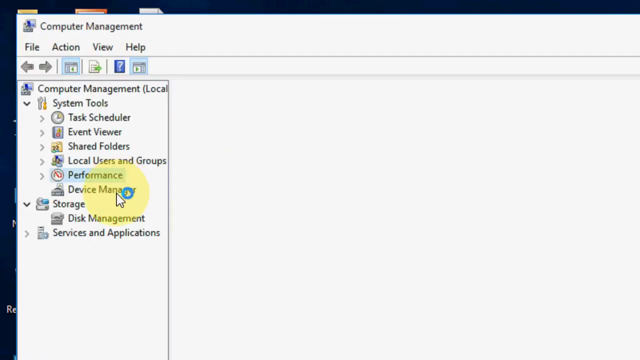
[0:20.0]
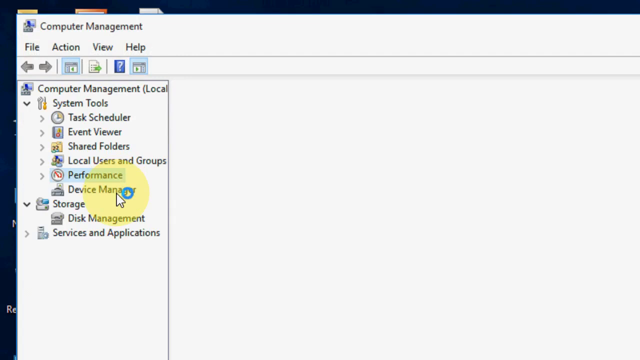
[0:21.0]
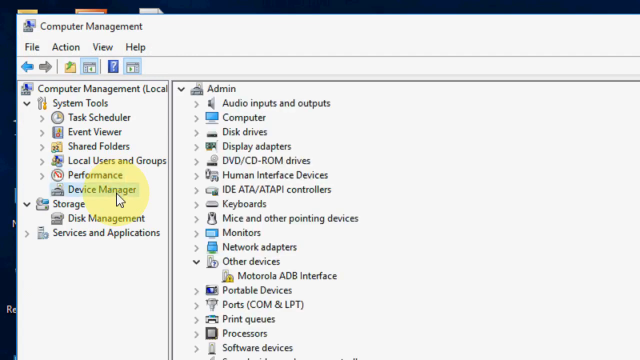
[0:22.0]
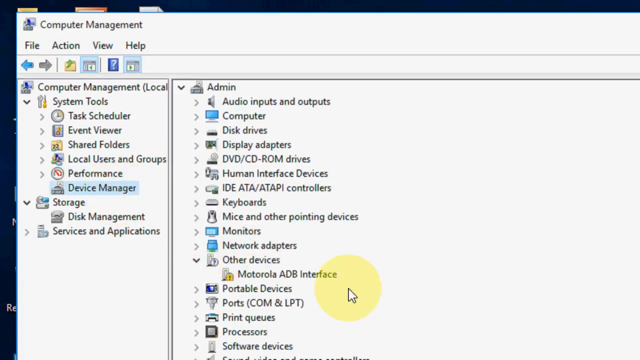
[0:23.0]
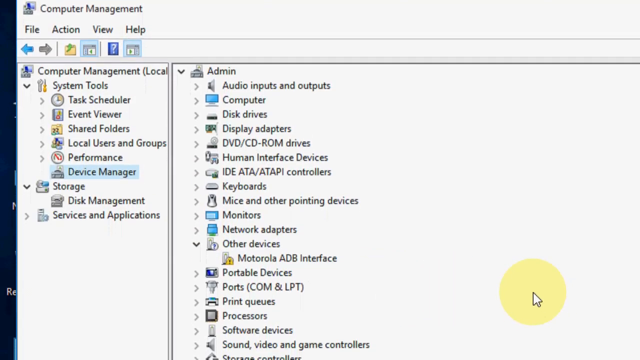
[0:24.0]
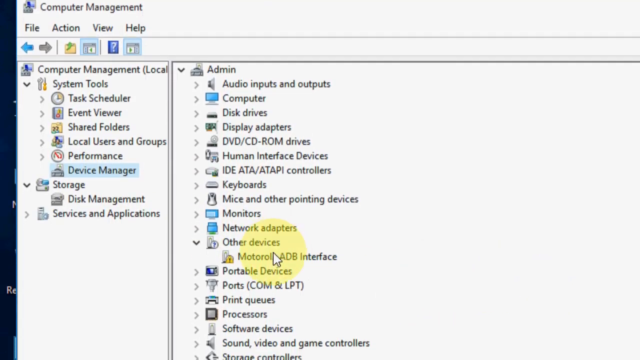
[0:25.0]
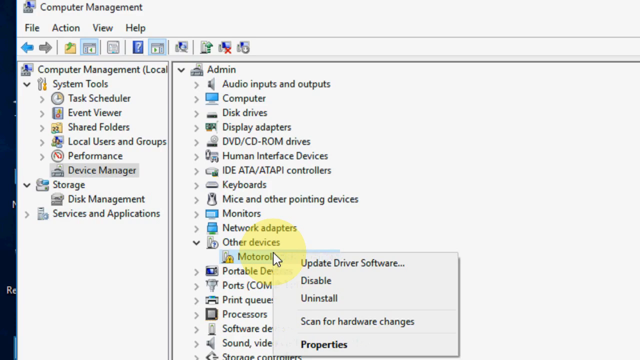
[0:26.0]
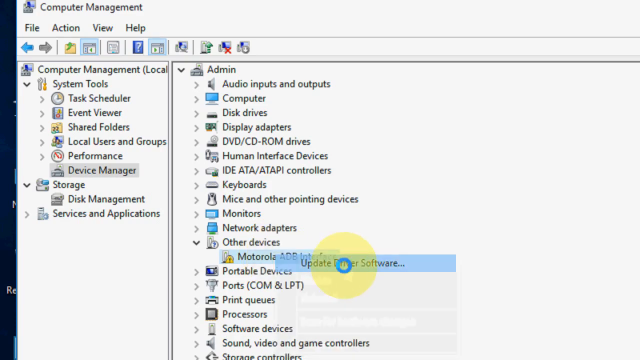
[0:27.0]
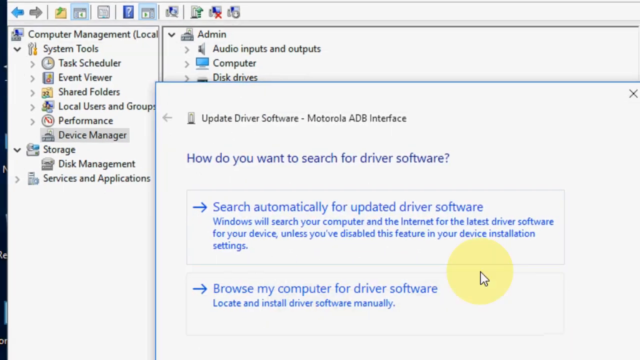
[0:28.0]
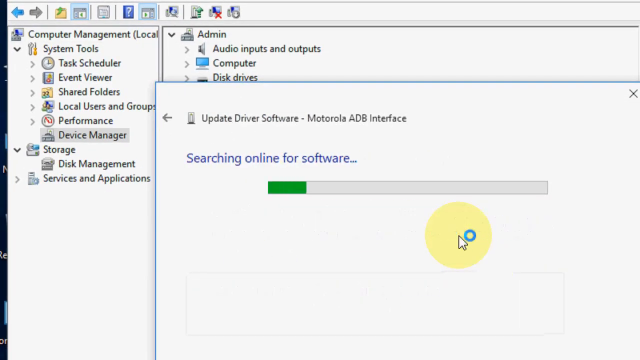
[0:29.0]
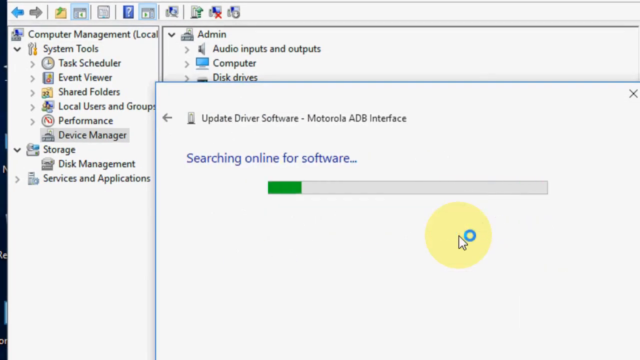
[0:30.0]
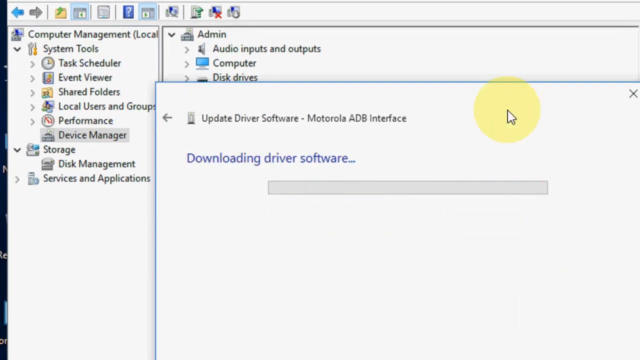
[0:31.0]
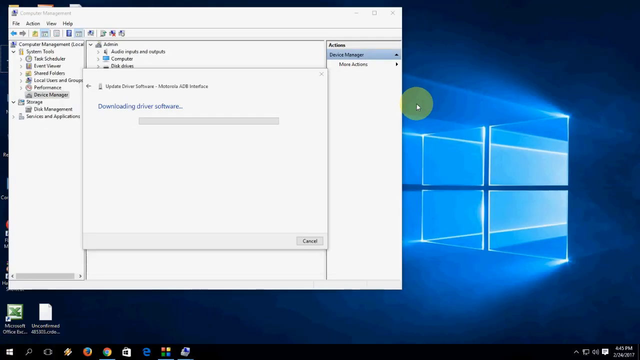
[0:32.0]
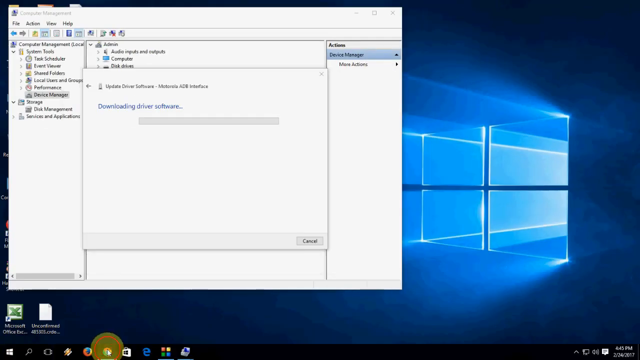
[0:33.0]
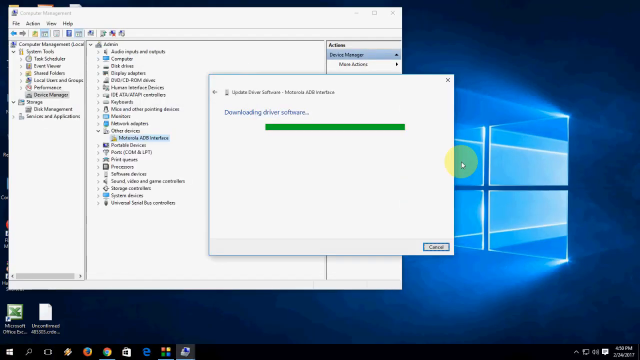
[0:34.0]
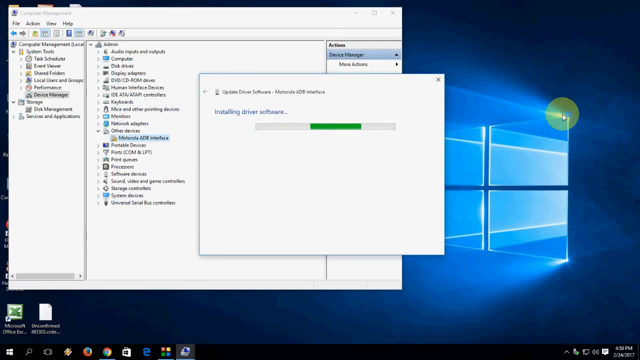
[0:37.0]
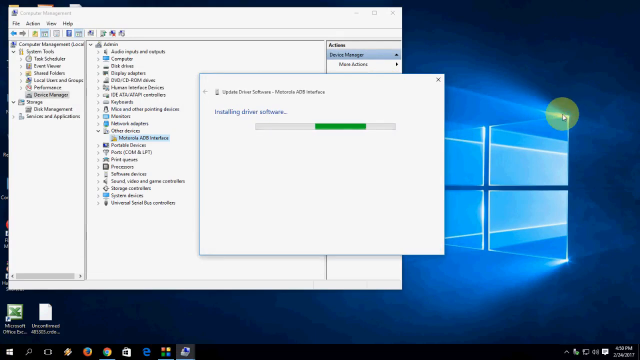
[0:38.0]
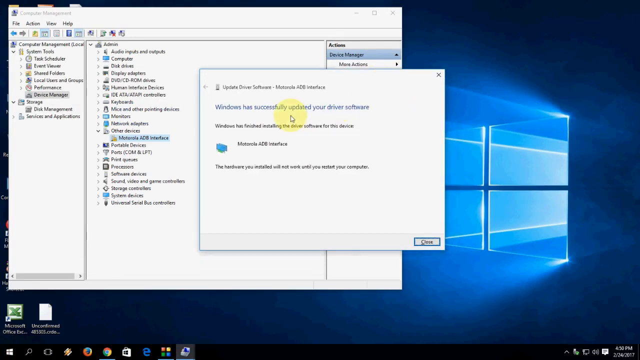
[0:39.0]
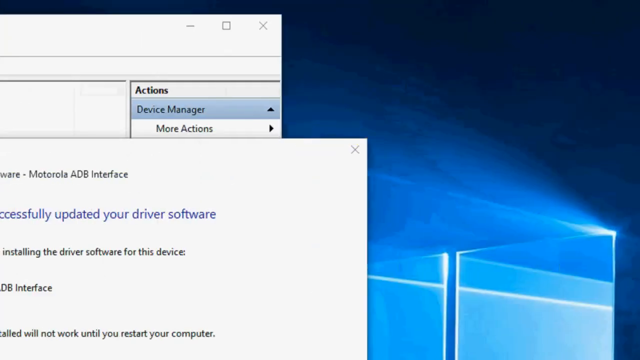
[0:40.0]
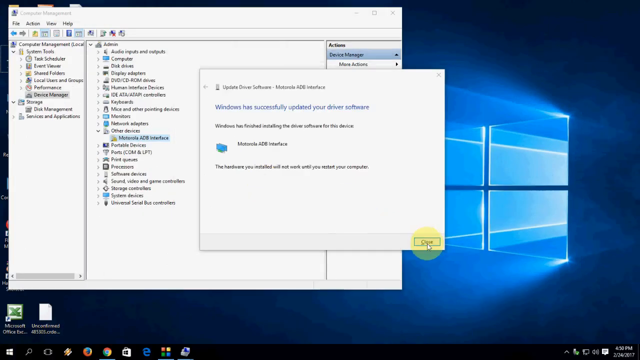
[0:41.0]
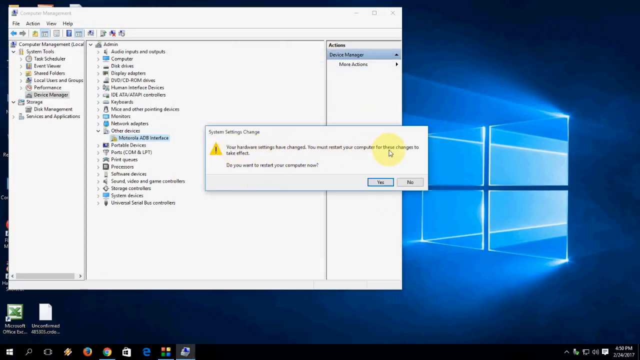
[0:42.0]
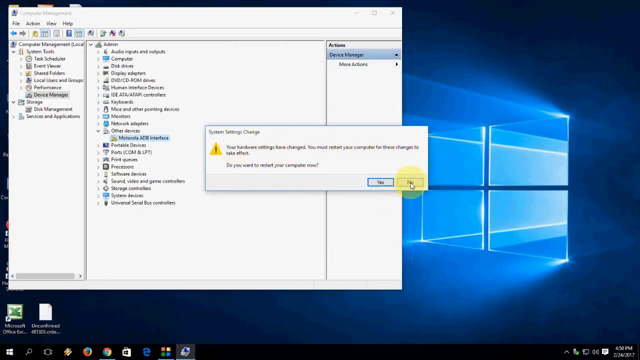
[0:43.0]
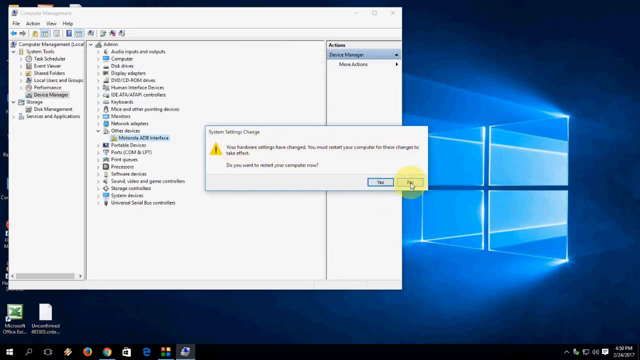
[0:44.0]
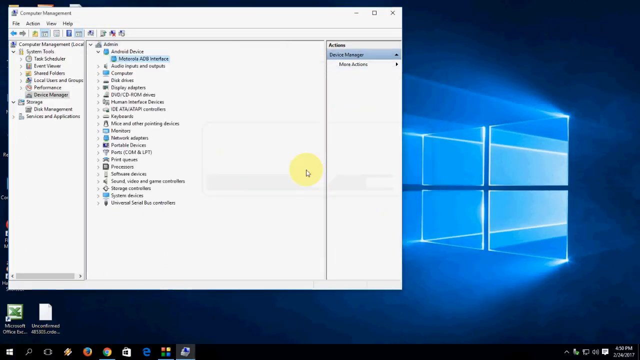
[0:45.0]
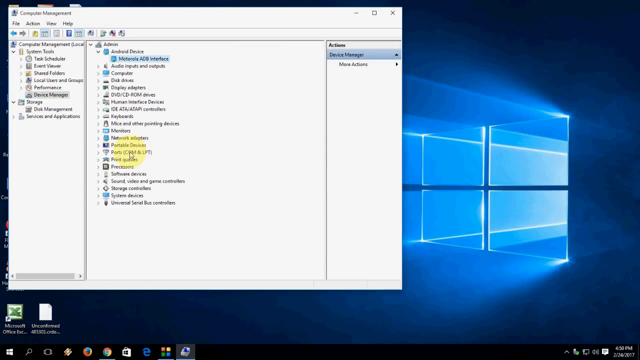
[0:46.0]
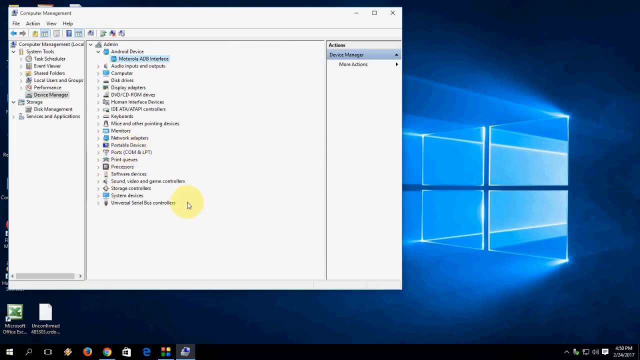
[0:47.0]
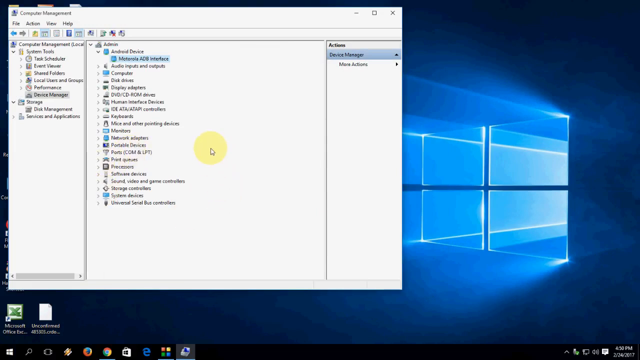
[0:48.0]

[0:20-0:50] The Computer Management page is open, showing the drop-down menu of System Tools. The user clicks on Device Manager, one of the tools under System Tools, which opens a long drop-down list in the main window under the Admin or Administrator level. The list shows individual components of the system, such as drives, display adapters, storage controllers and monitors. The person clicks on one of the icons under Other Devices, opening a pop-up window for updating that component's software; the person appears to be updating it.